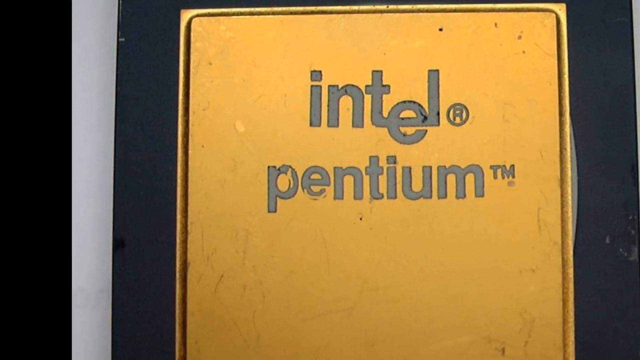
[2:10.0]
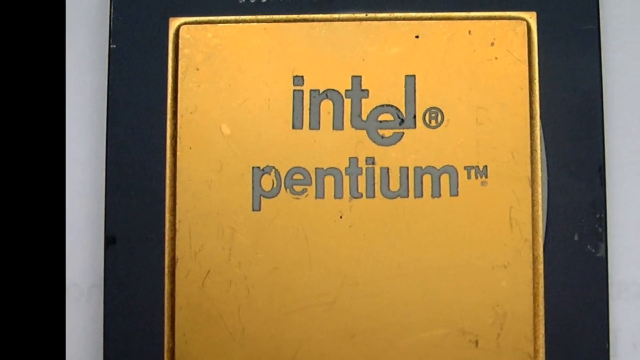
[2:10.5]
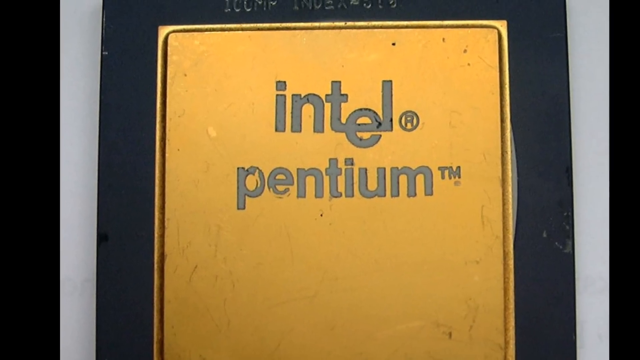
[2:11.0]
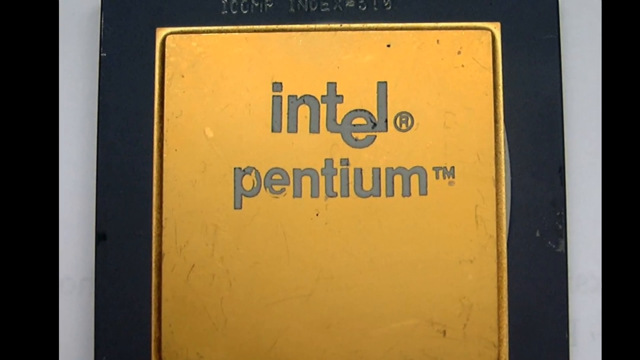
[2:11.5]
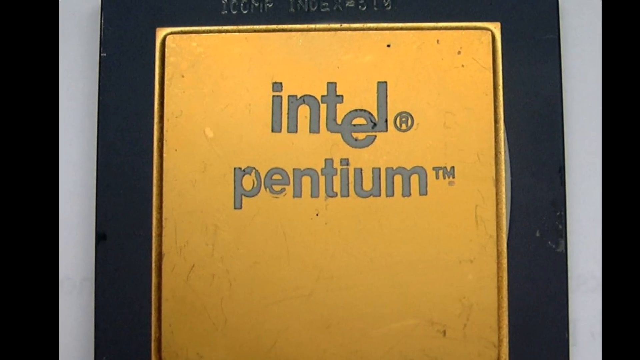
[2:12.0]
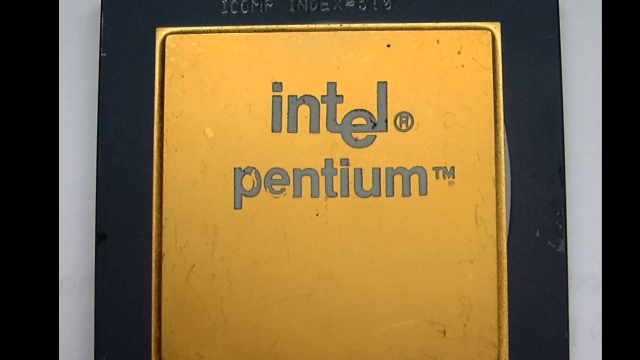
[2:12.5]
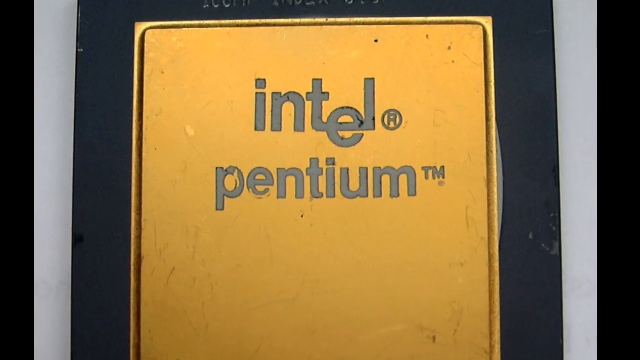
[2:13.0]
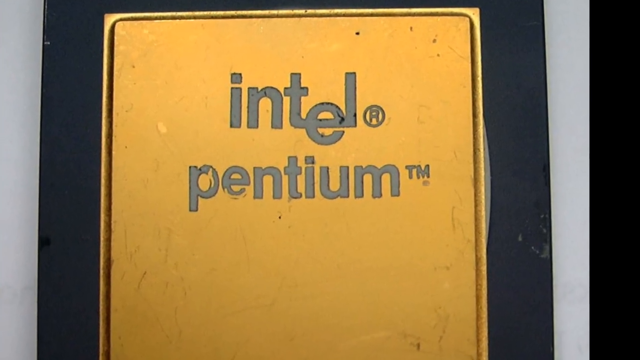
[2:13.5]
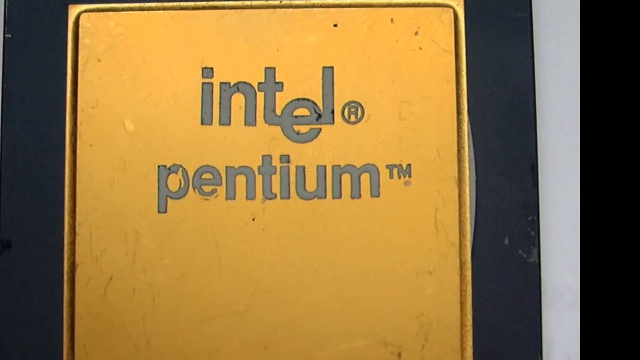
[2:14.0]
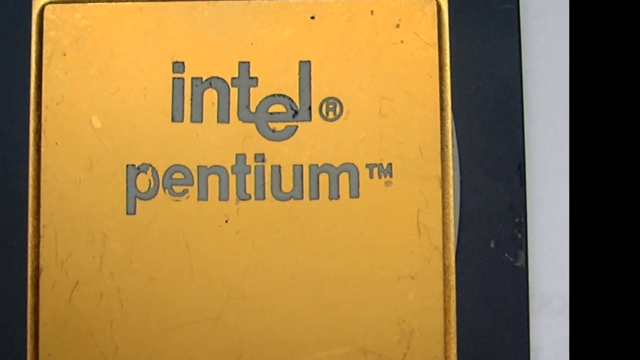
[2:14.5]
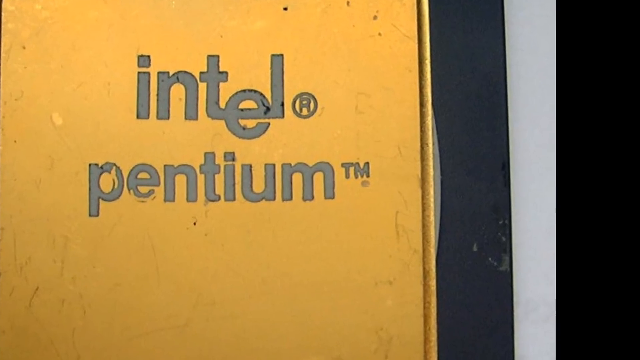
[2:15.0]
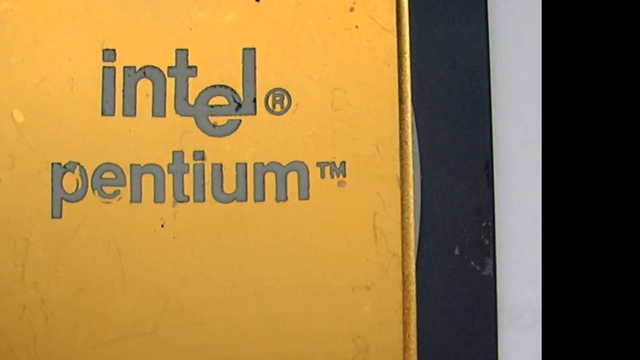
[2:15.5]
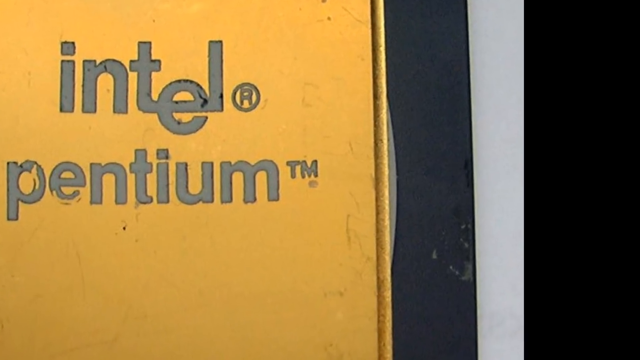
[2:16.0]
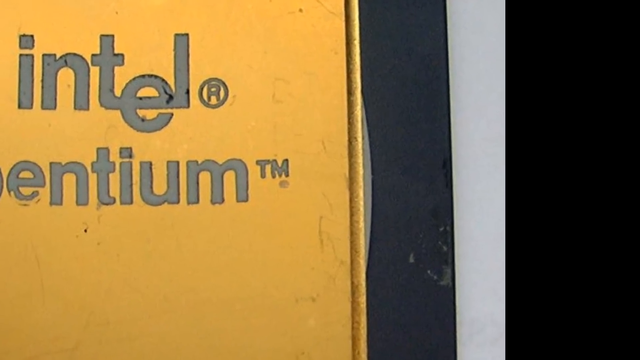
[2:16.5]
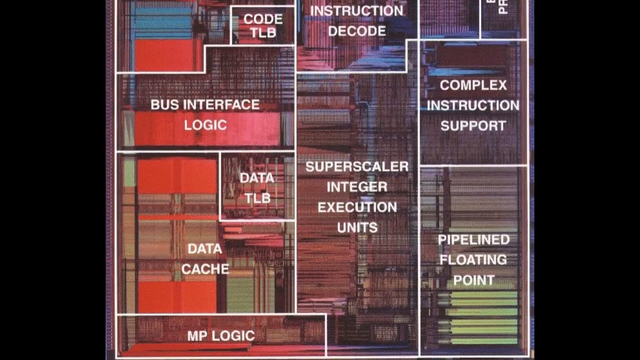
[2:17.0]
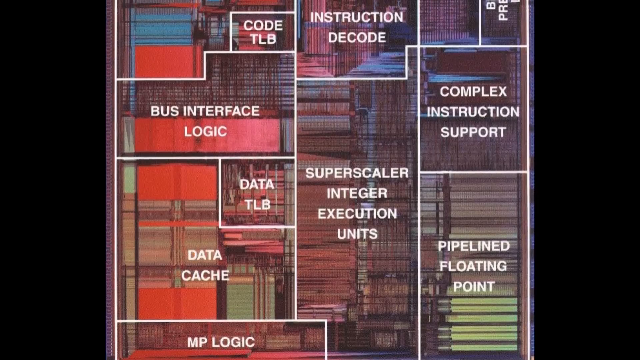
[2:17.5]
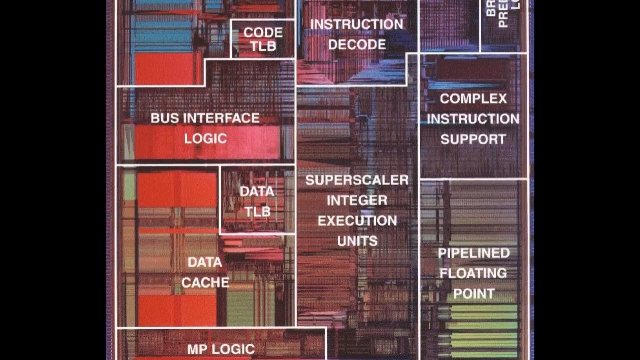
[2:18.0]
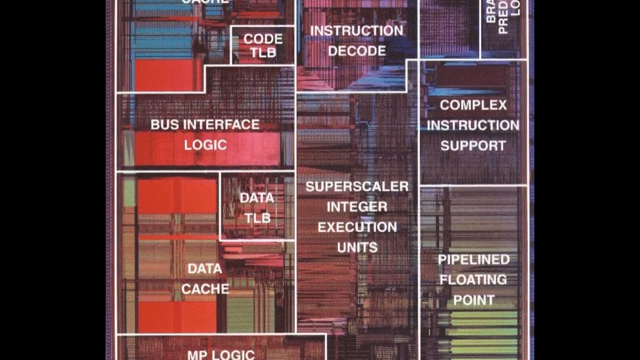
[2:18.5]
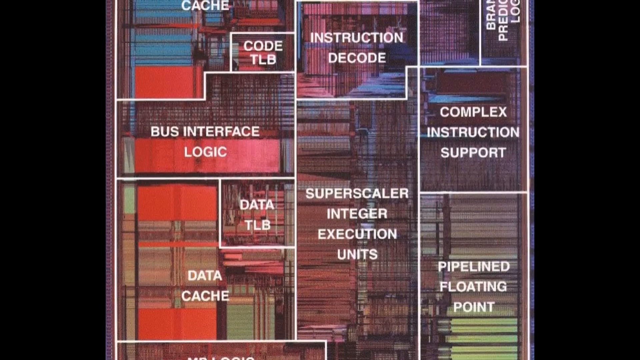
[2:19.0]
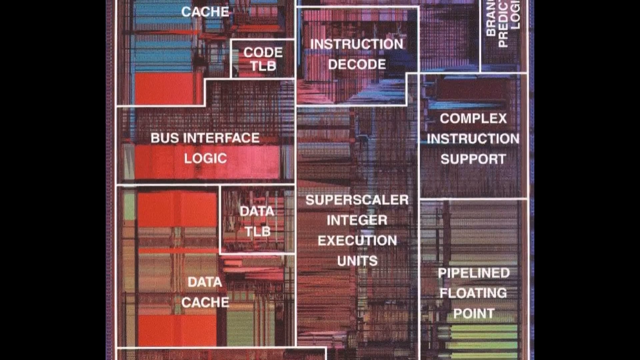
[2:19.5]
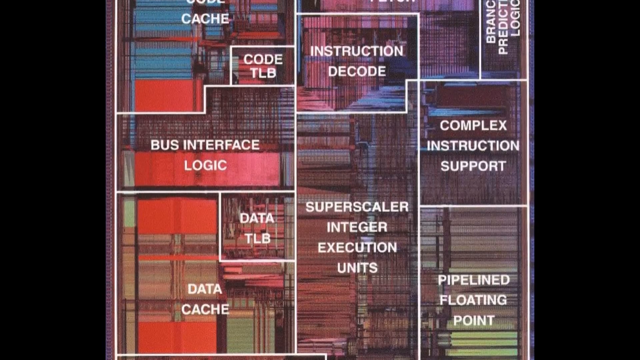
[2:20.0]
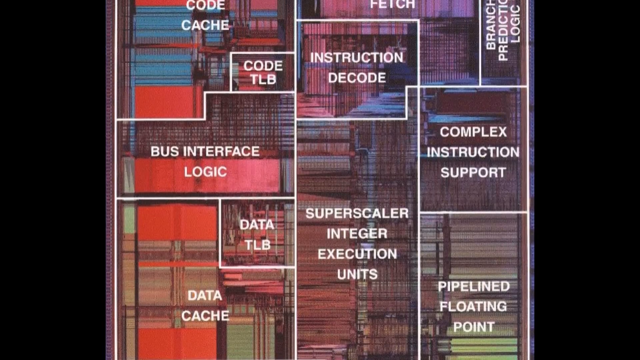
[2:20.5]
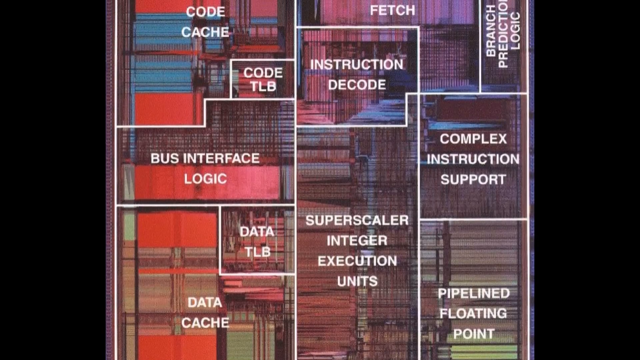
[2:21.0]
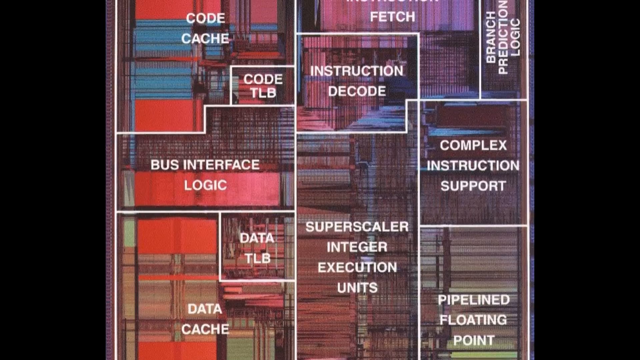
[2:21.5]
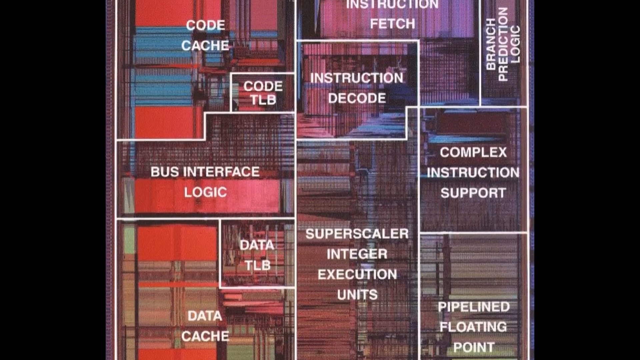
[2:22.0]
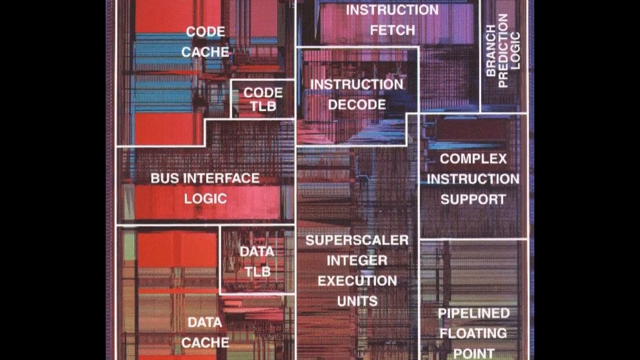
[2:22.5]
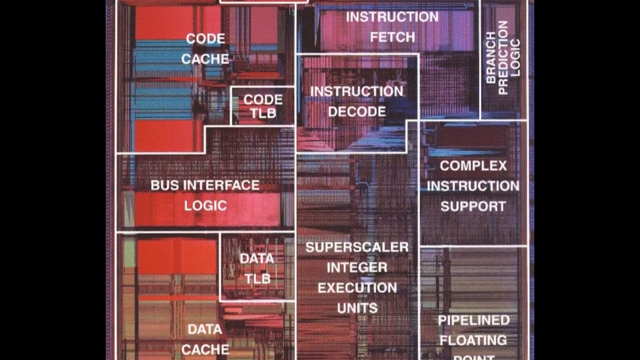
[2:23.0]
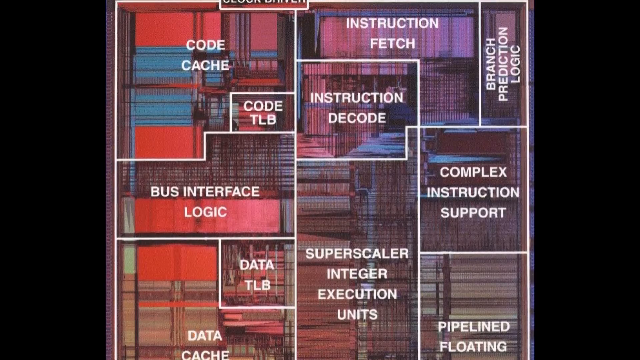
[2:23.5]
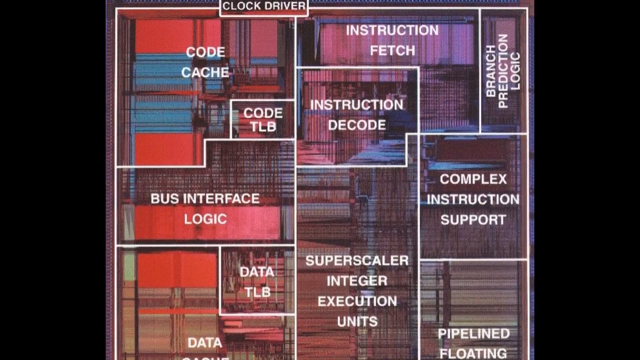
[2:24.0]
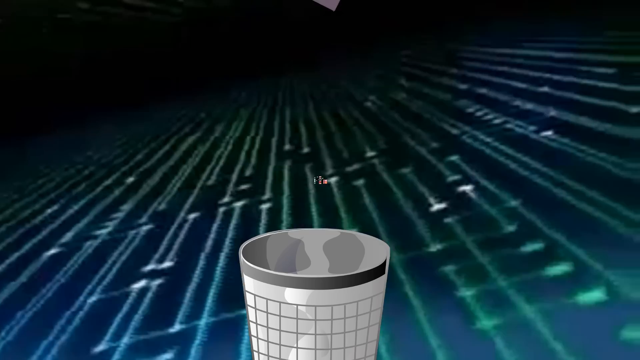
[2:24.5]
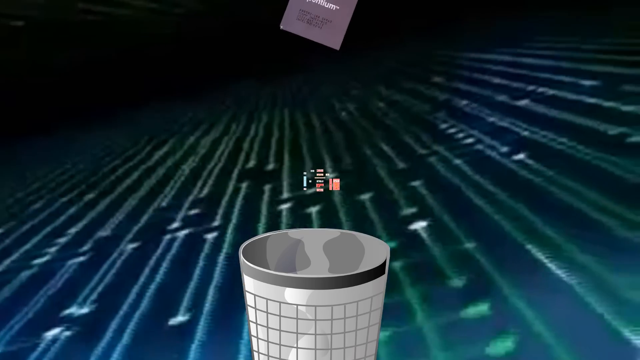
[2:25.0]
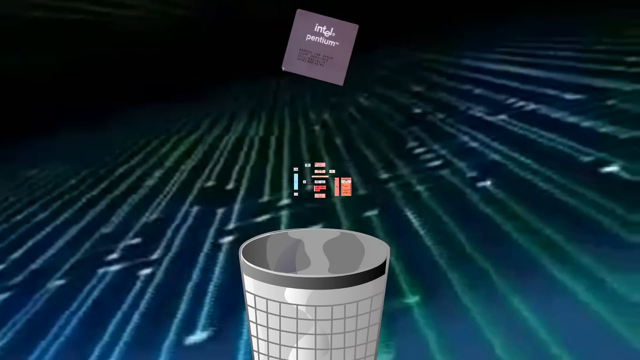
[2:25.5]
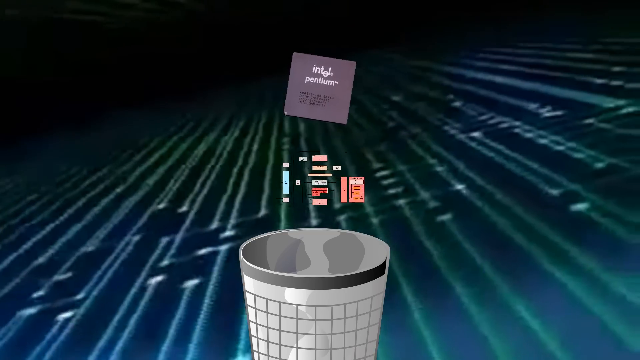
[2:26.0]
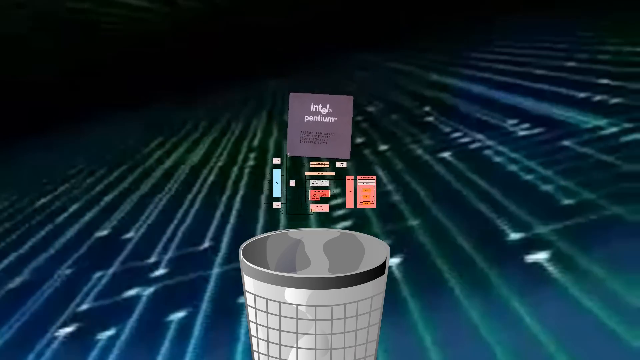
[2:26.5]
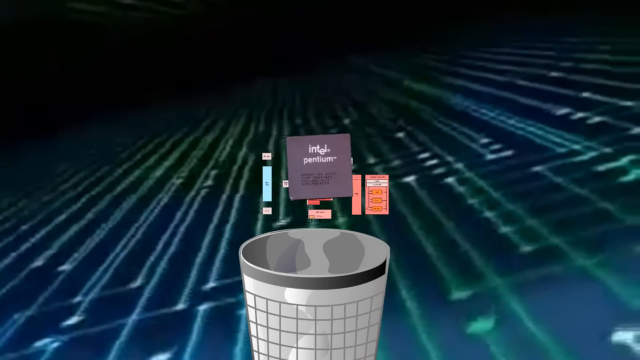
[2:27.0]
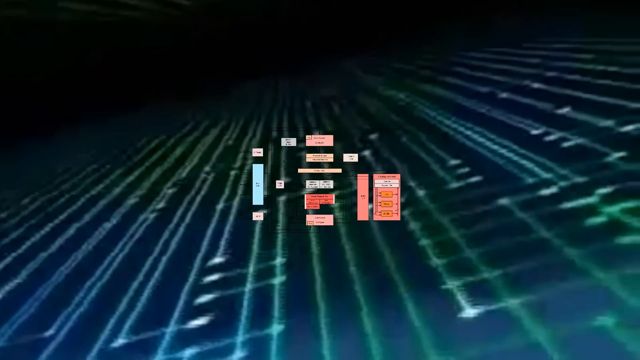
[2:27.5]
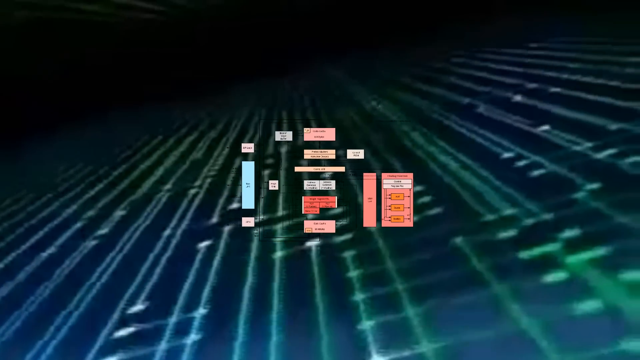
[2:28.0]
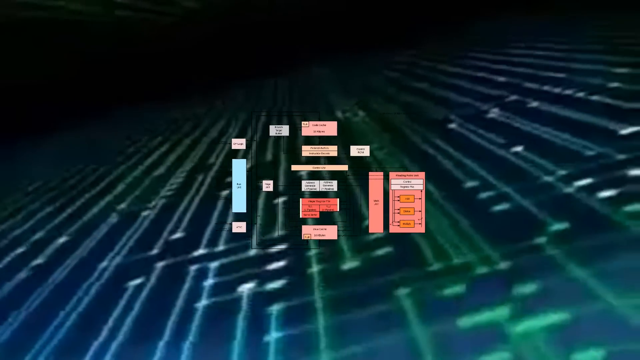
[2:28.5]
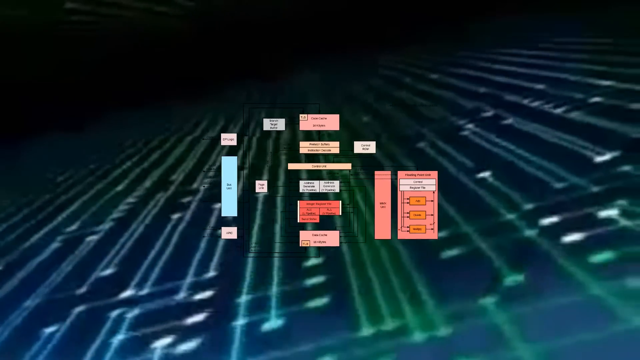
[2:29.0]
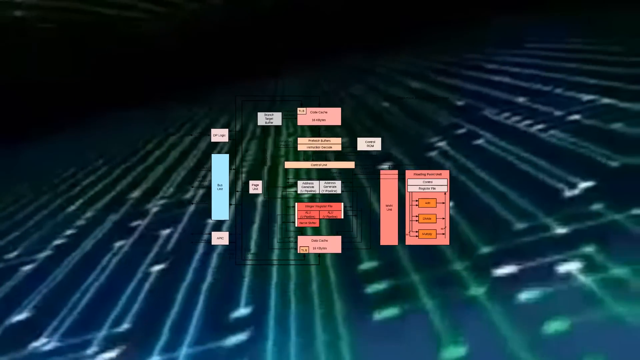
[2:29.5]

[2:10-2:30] Another chip appears, this time with a gold inside and "Intel Pentium" written in gray; it looks older. Many of them are shown as the view sort of zooms into different parts. Next is something hard to make out that is divided into sections, each with a title, including "pipeline floating-point super scaler integer execution units," "data TLB bus interface logic complex instruction support code TLB instruction decode" and "instruction fetch branch prediction logic." Then comes a digital image that looks like computer coding, followed by a digital trash can, a disk, and many other little images that flash too quickly on the screen to make out.